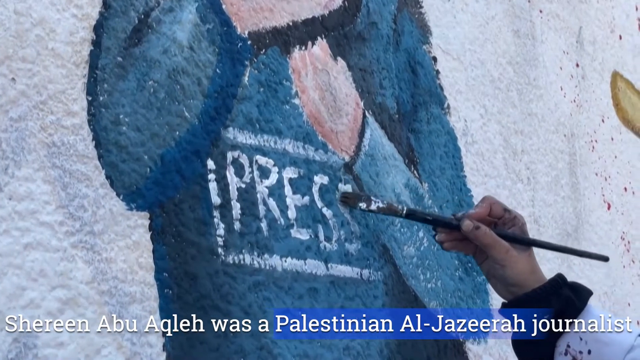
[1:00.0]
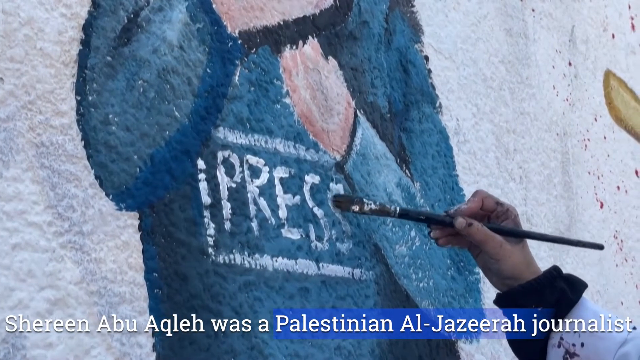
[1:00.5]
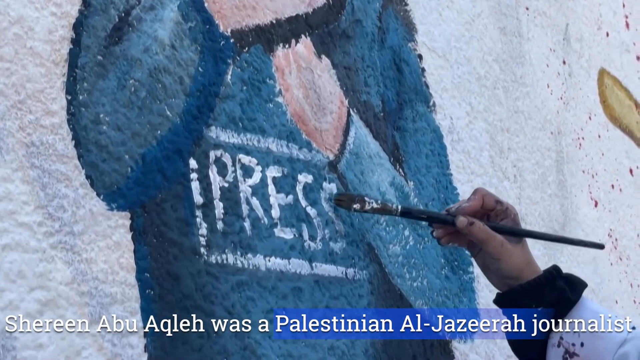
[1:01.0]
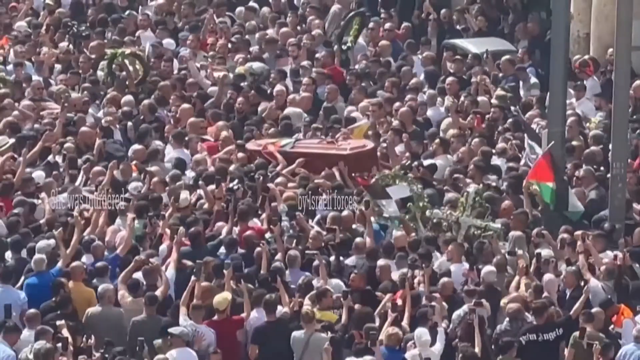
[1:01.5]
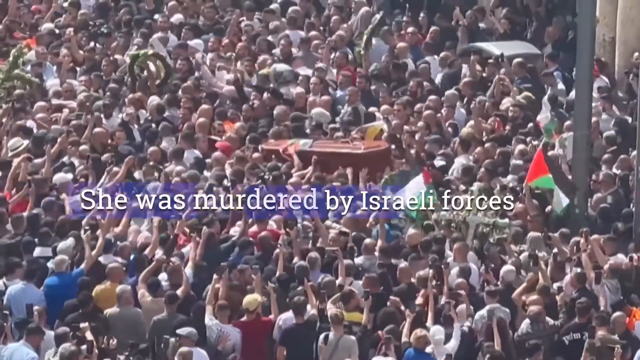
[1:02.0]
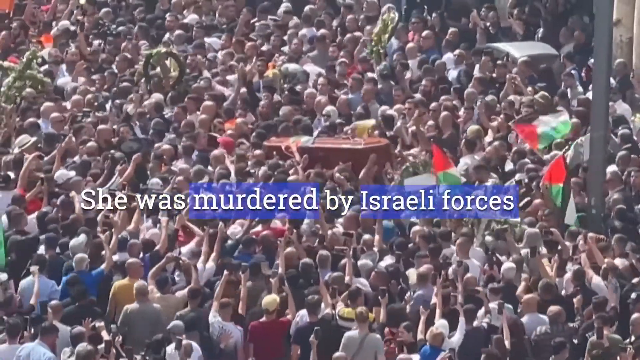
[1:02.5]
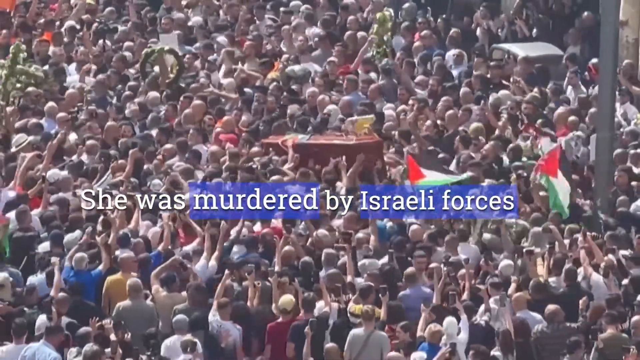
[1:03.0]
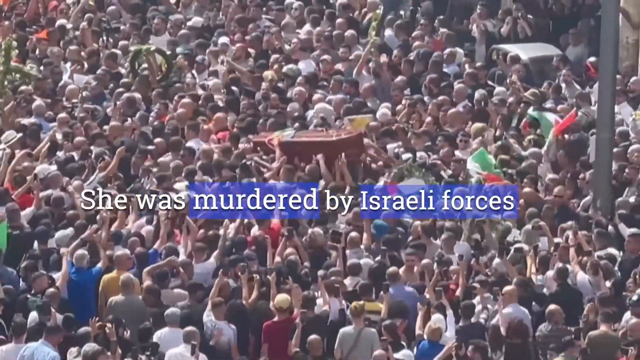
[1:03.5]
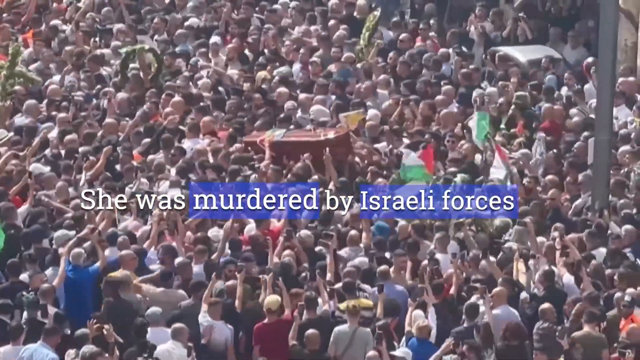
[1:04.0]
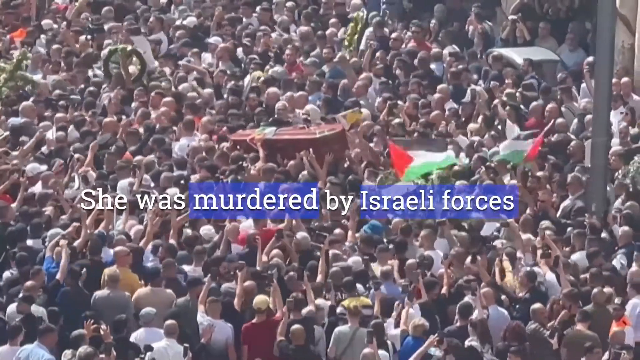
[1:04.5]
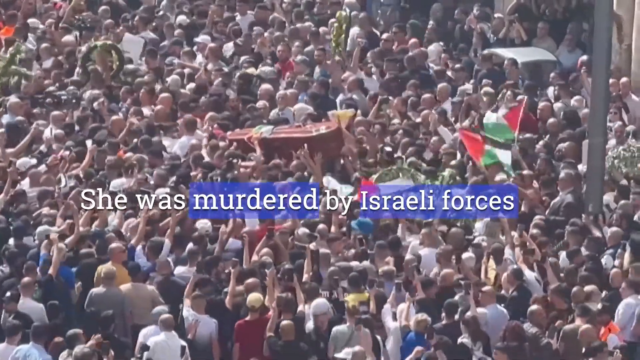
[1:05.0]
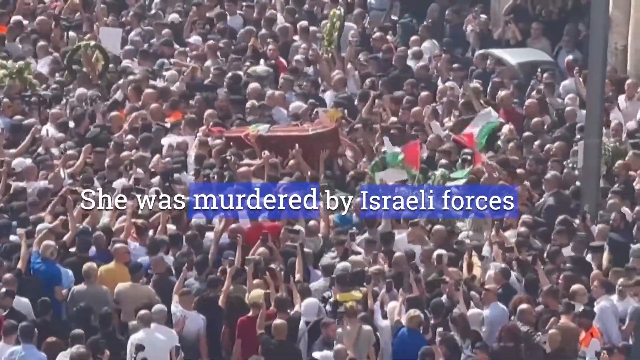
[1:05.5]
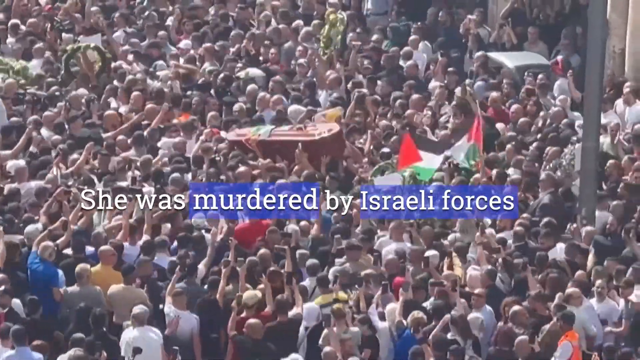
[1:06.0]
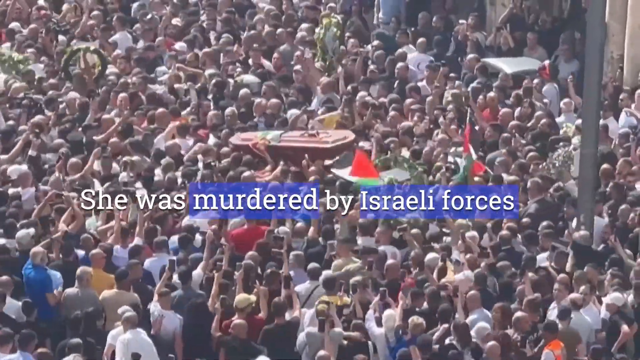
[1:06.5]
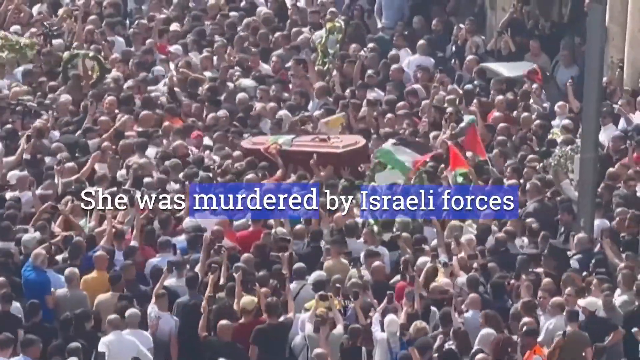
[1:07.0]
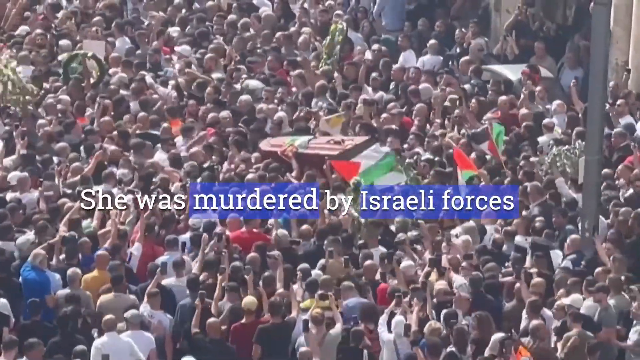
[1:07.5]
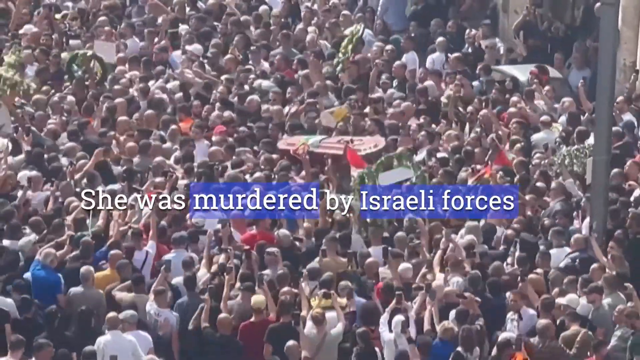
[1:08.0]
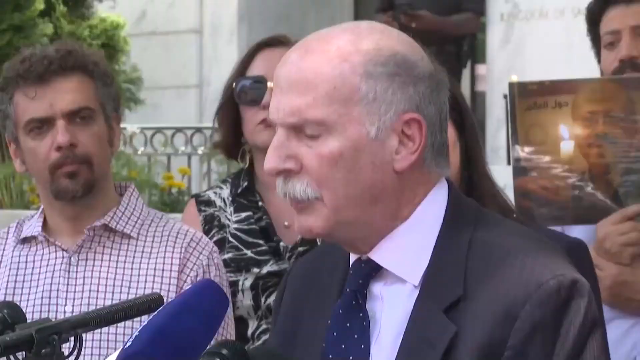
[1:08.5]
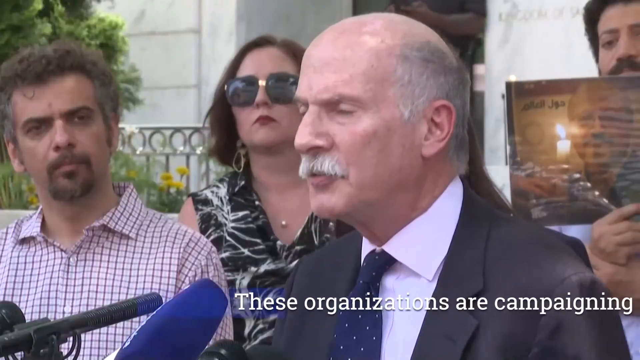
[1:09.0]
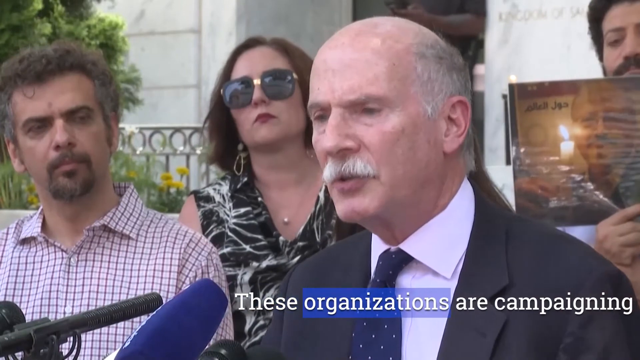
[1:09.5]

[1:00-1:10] A hand holding a paintbrush draws part of the mural, the bottom of the figure wearing the helmet with the word "PRESS". The figure is Caucasian and wears a blue shirt with the word "PRESS" in white in a white rectangle on its front. Text reads "She was murdered by Israeli forces." Behind the words are hundreds and hundreds of people raising their hands in anger, along with several Palestinian flags. The movement in the scene is energetic, and the anger is palpable.